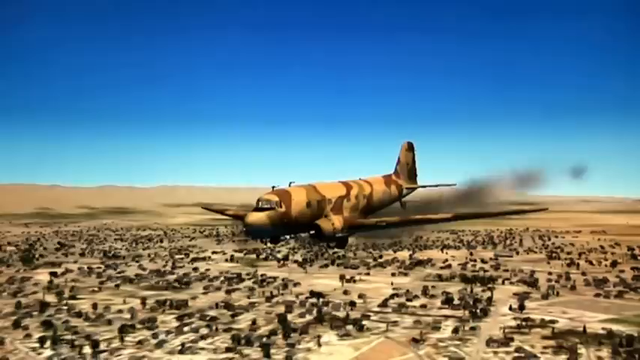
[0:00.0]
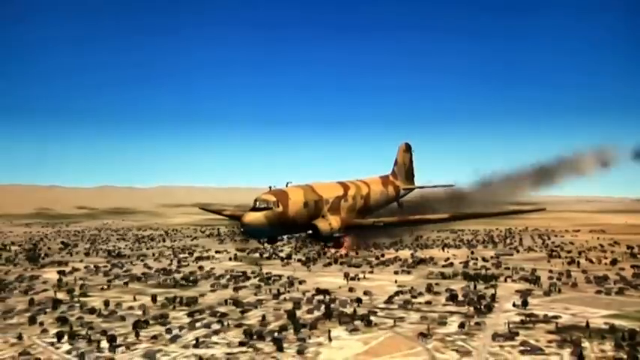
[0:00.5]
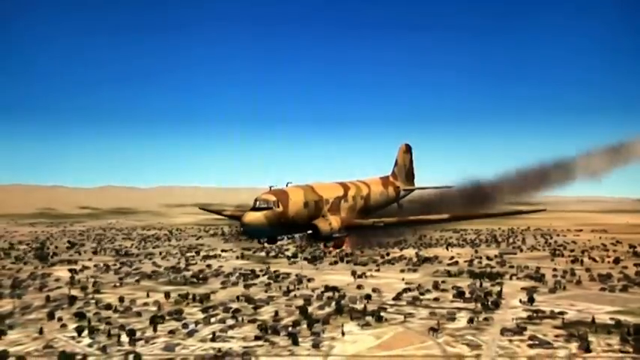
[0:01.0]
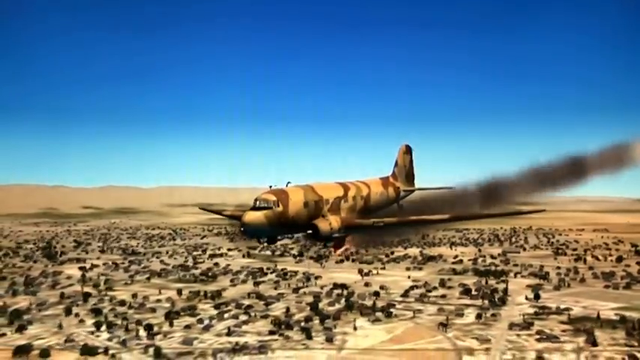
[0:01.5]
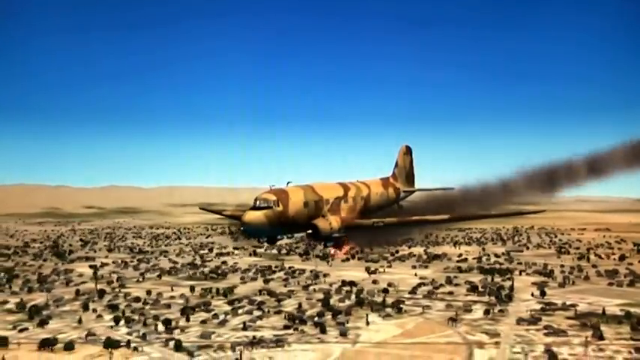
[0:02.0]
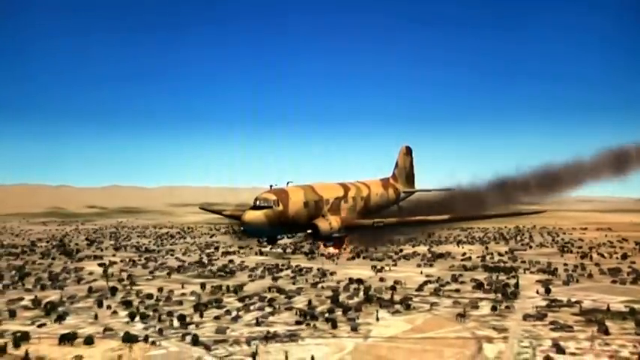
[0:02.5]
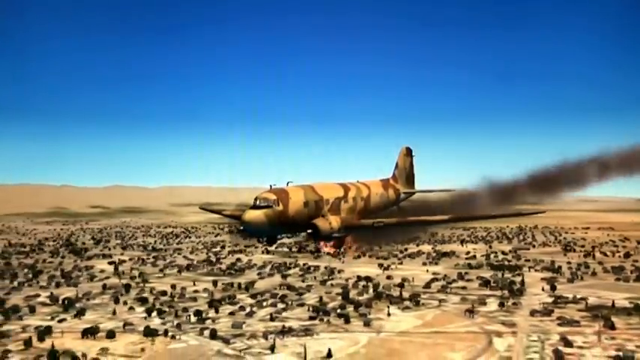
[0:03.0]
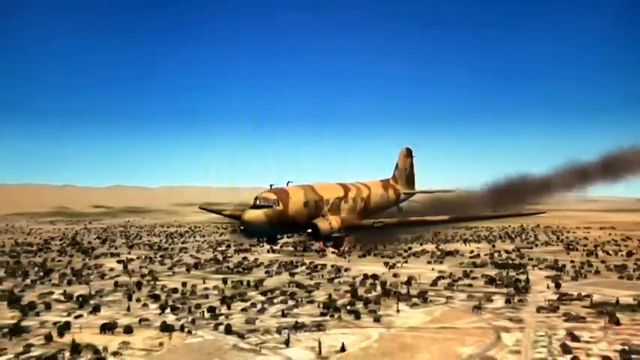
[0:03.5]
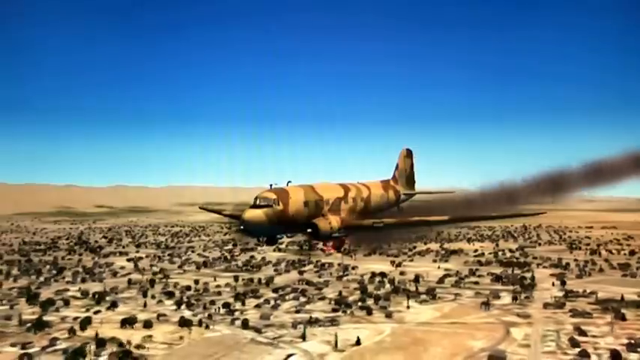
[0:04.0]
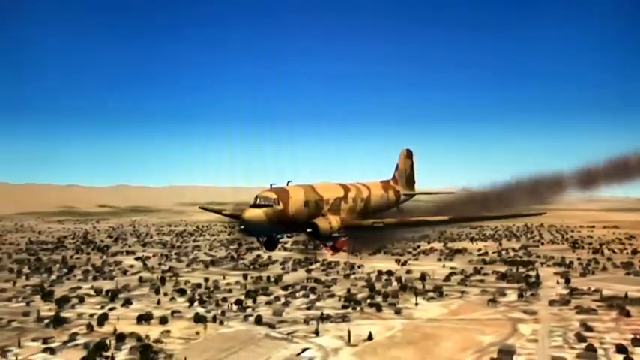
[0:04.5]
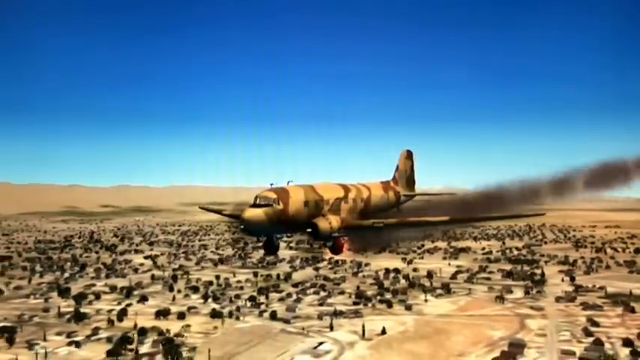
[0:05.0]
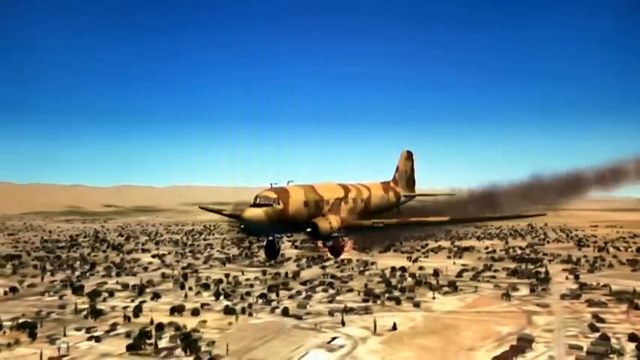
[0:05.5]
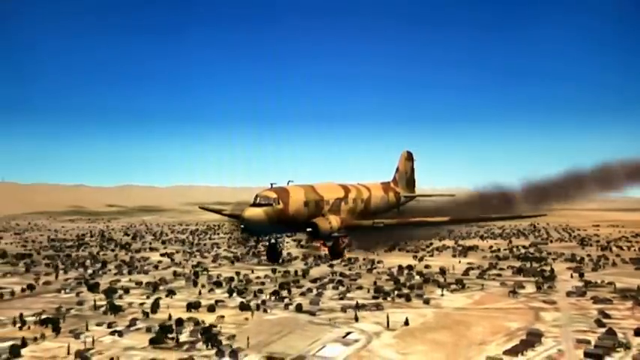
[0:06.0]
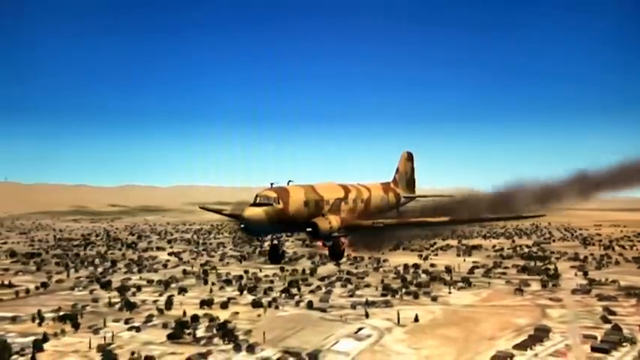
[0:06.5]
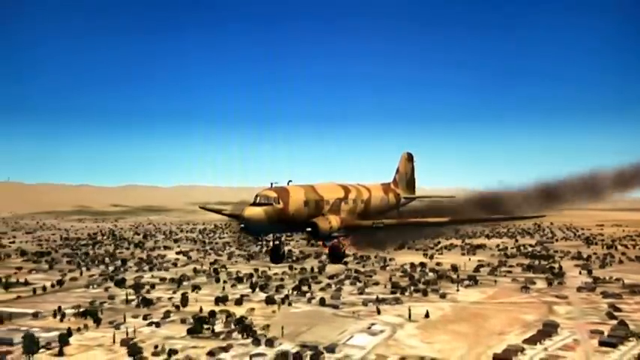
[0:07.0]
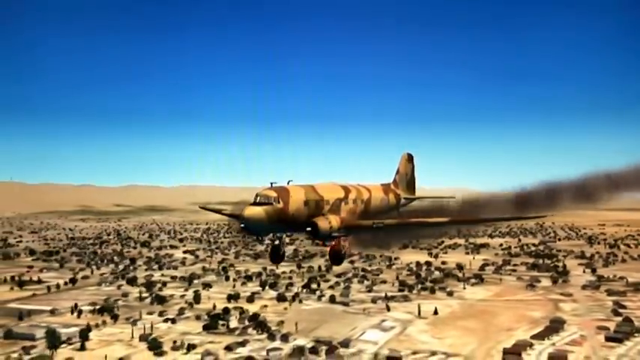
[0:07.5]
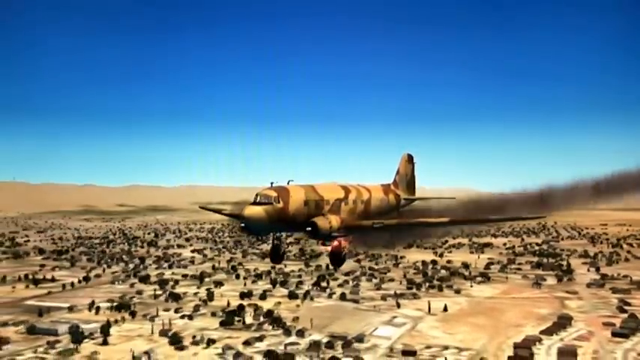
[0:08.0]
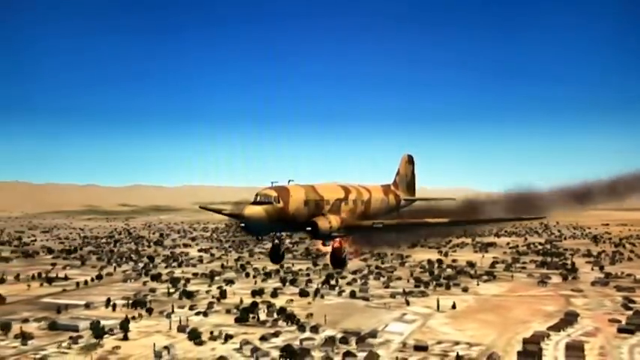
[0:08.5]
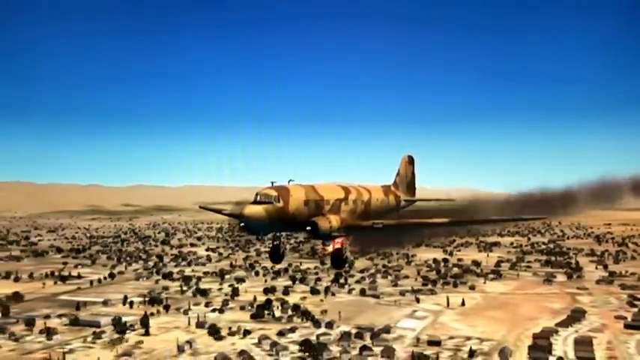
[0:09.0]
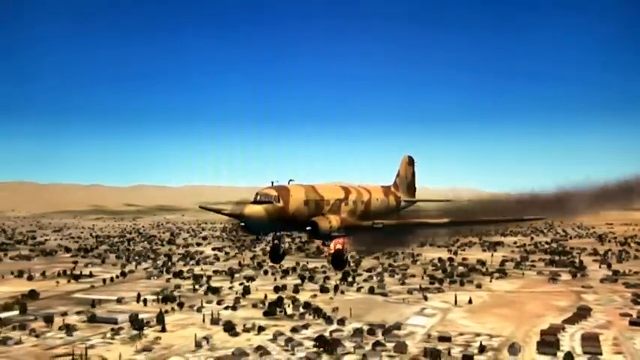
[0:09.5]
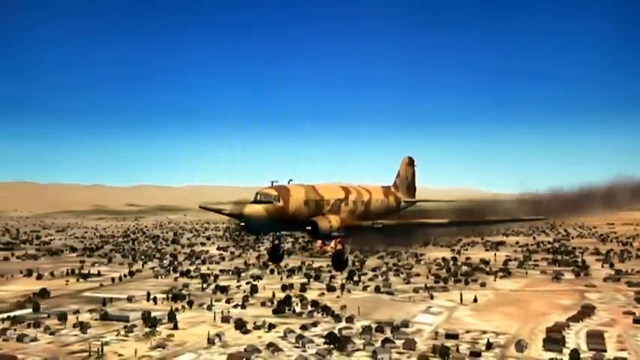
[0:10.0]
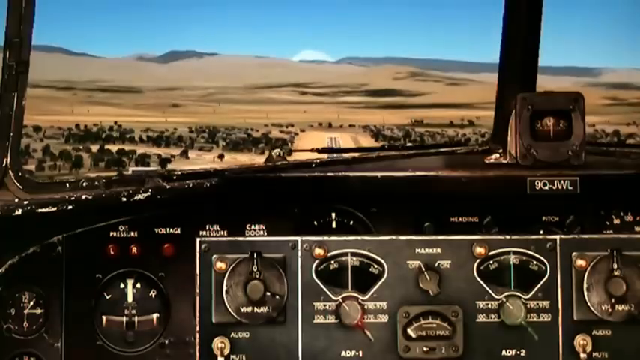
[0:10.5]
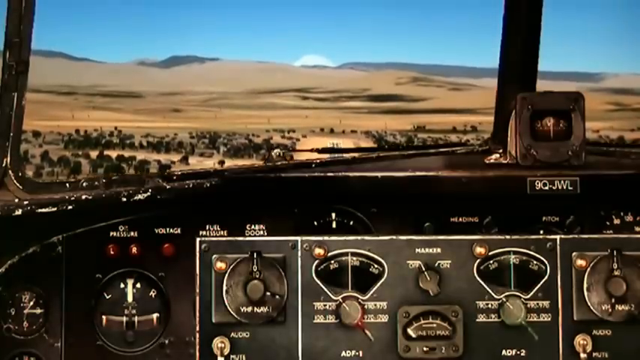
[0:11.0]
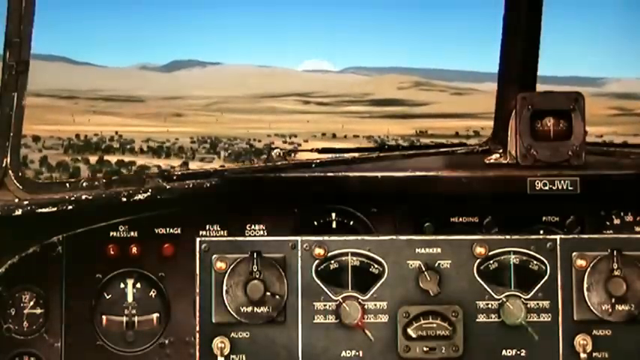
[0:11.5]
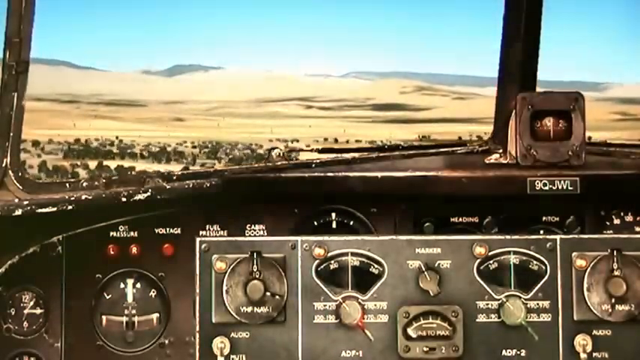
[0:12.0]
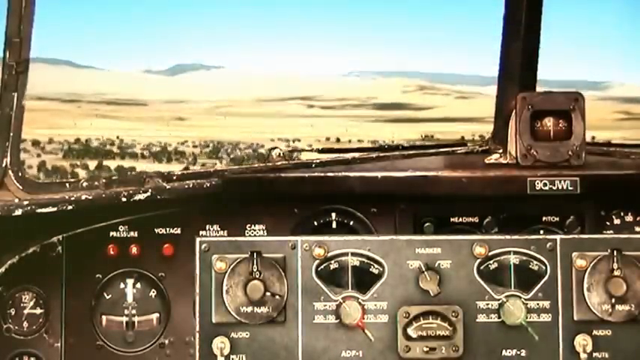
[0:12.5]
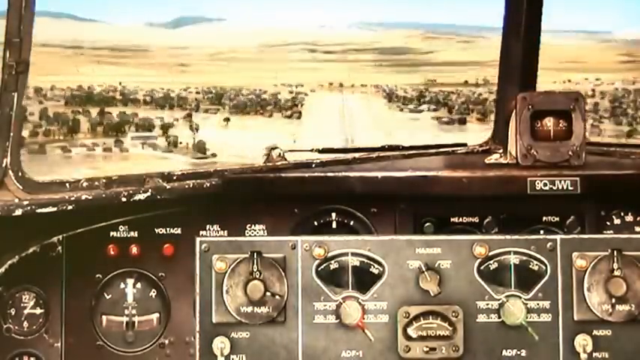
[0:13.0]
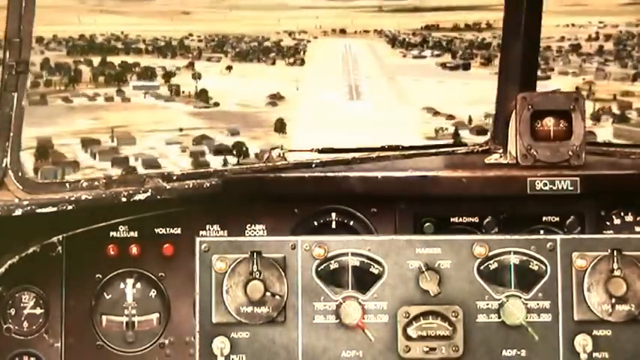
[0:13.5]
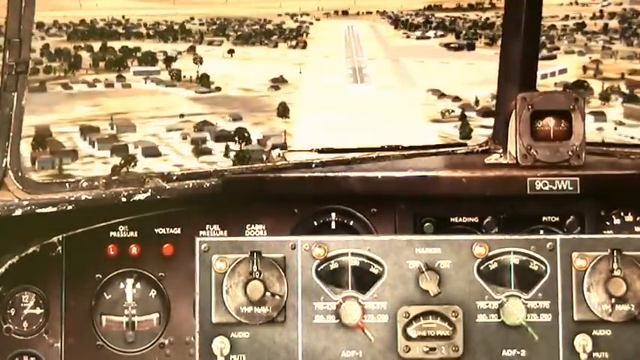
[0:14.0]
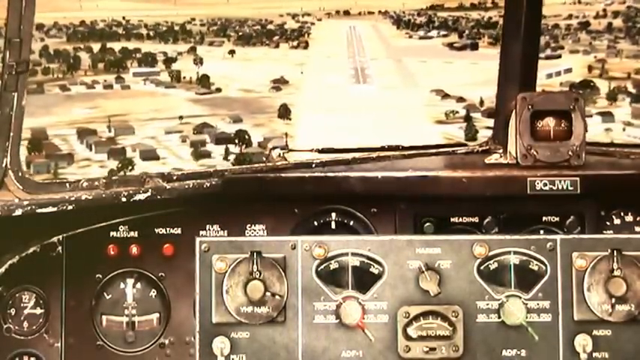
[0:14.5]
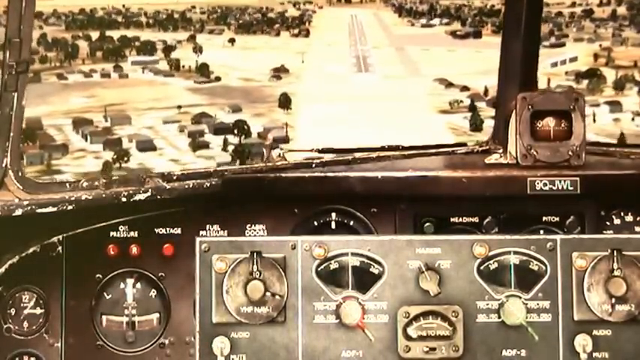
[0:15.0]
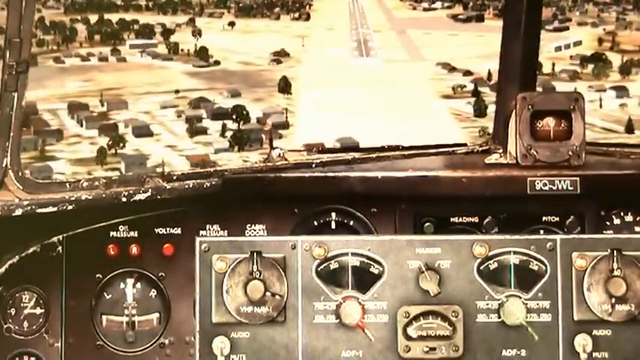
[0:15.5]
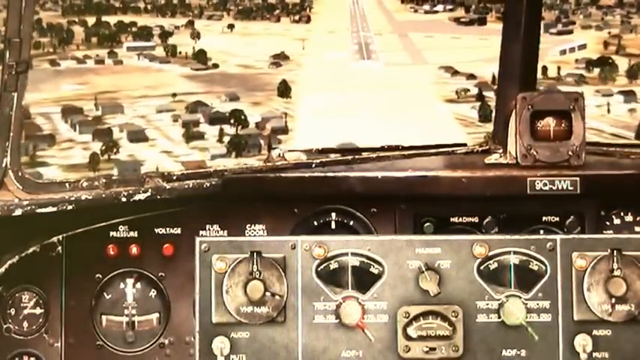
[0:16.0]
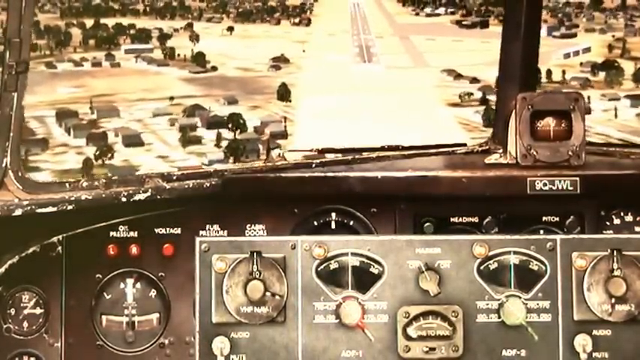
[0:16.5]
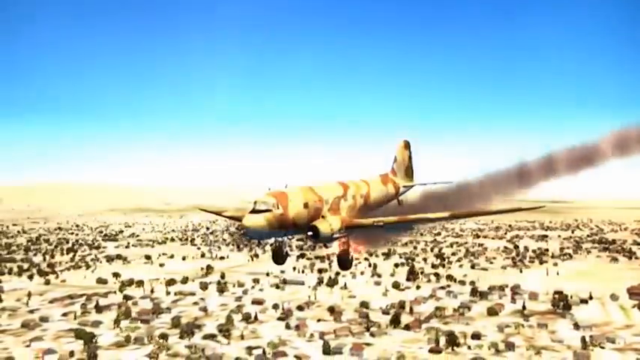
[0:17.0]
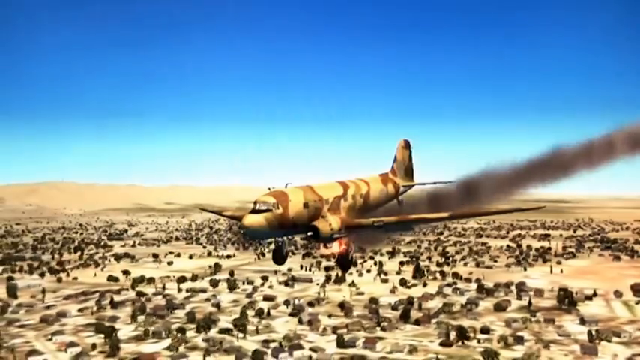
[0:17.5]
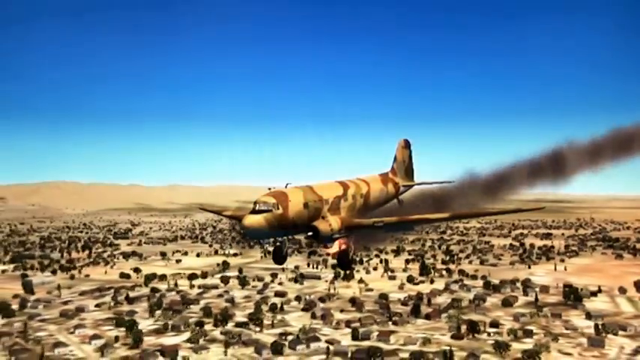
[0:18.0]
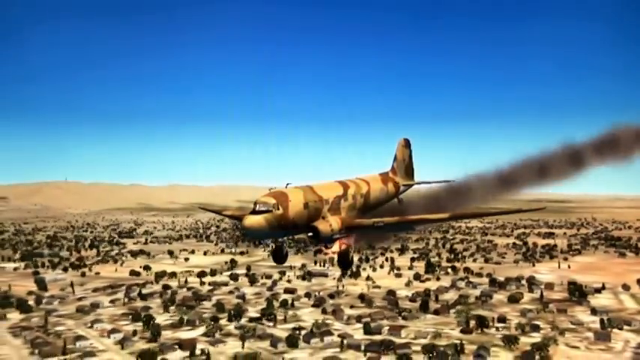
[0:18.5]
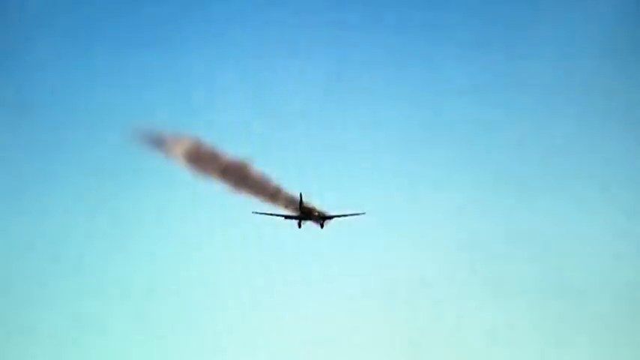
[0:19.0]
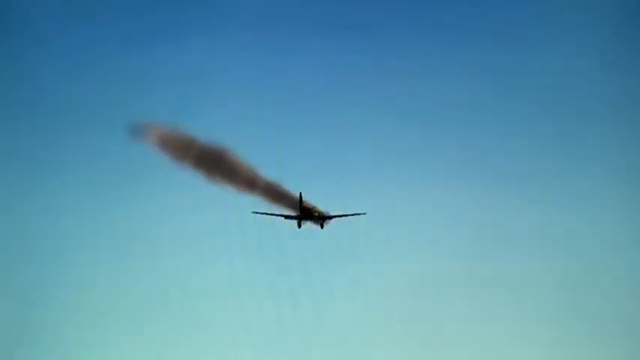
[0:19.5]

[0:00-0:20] In video game footage, a plane flies over a desert area. The plane is camouflaged in beige and brown, smoke trails behind it, and one of its engines is on fire. The landing gear is exposed and lowered so that it can land. Below is terrain of brown earth with lots of trees, and a blue sky is in the background. Once the landing gear is fully down, the view switches to the cockpit, looking out the window at desert ahead. The instrument panel spans left and right, and a little sign on it says "9Q-JWL". There is a gyroscope showing the direction, an airspeed instrument, and various other instruments on the panel. Most of the cockpit is black with chipped paint. There are red buttons, dials and toggles; one toggle is labeled off and on, with "marker" written above it.